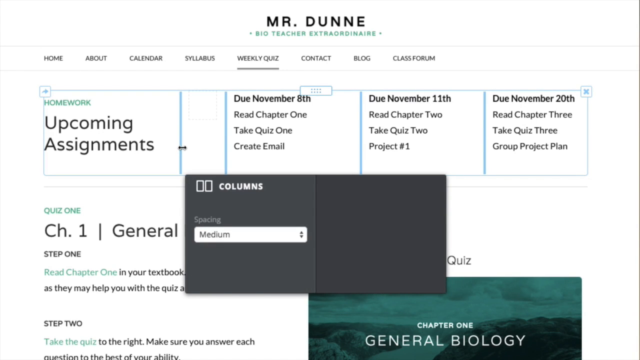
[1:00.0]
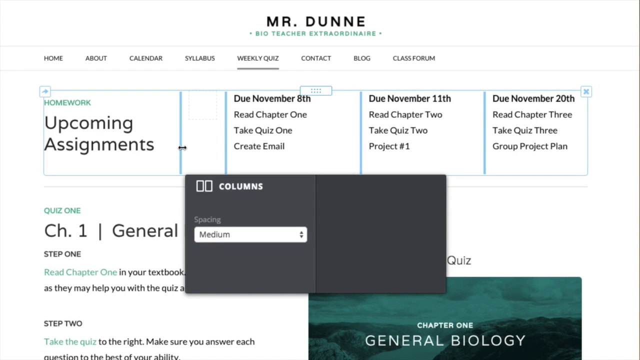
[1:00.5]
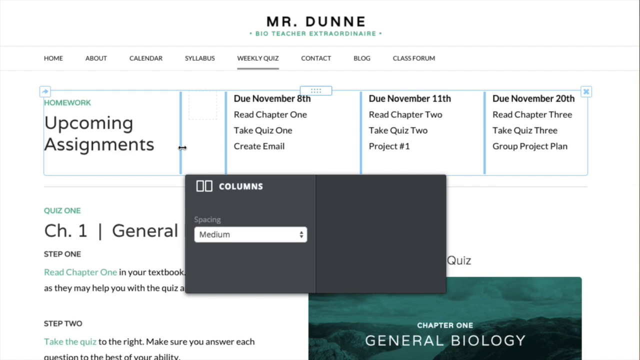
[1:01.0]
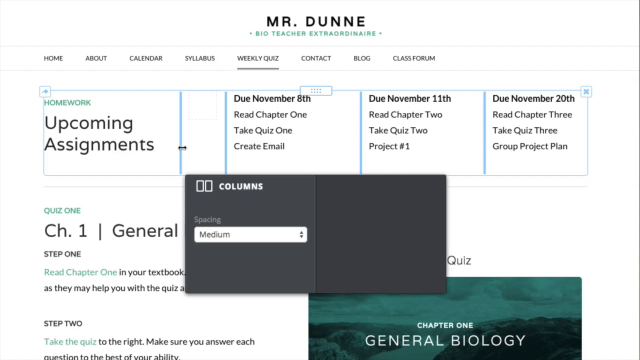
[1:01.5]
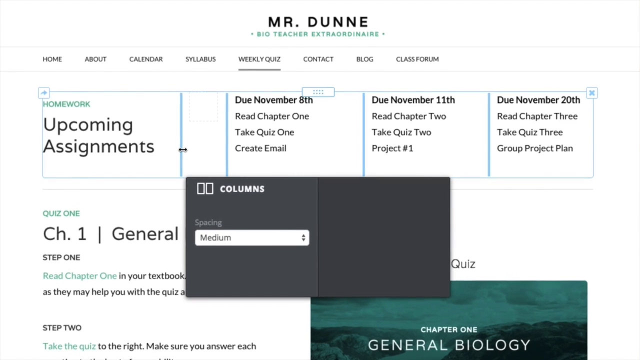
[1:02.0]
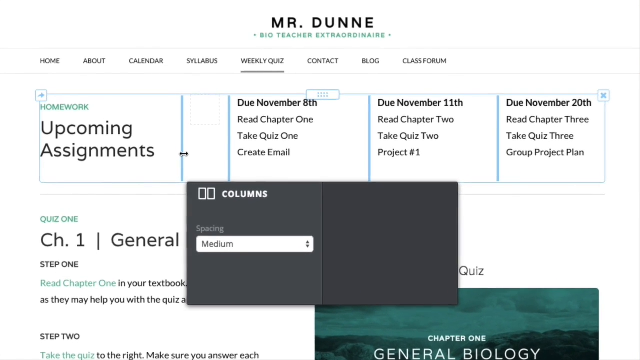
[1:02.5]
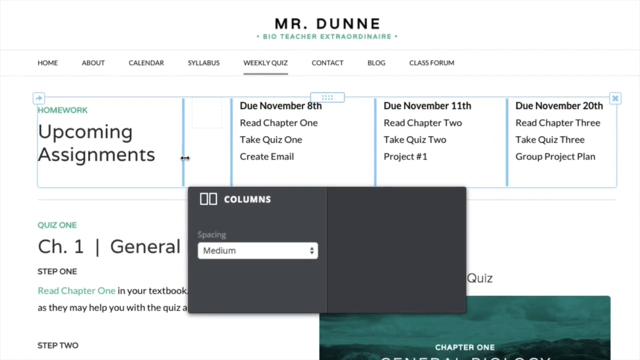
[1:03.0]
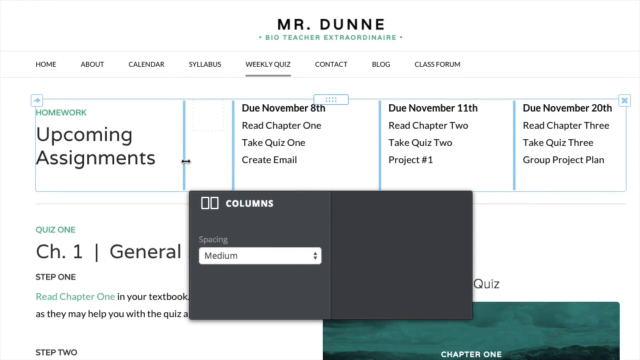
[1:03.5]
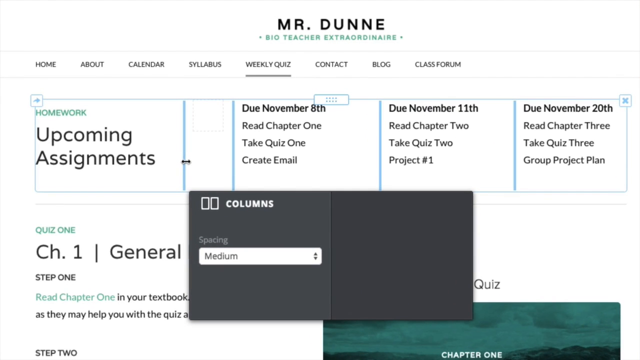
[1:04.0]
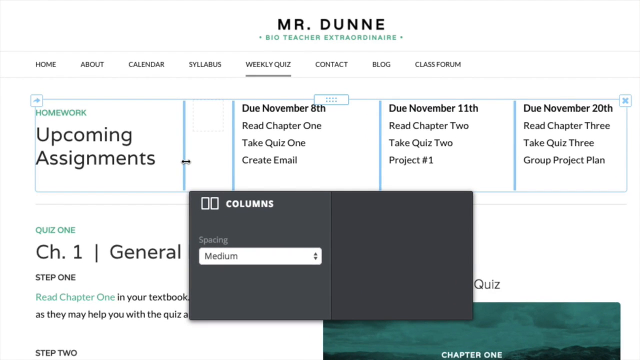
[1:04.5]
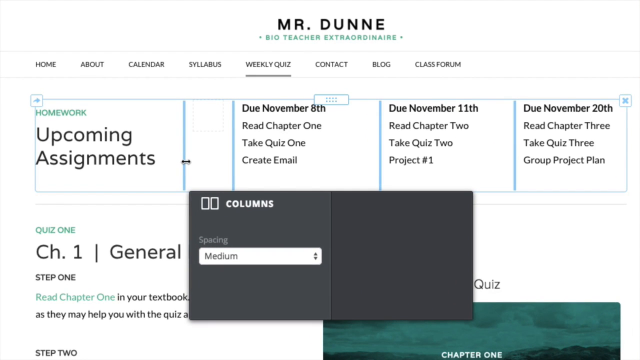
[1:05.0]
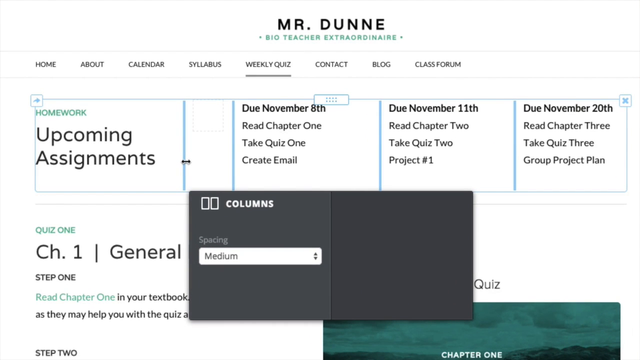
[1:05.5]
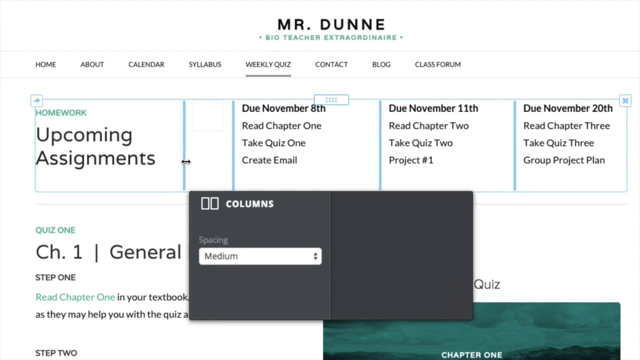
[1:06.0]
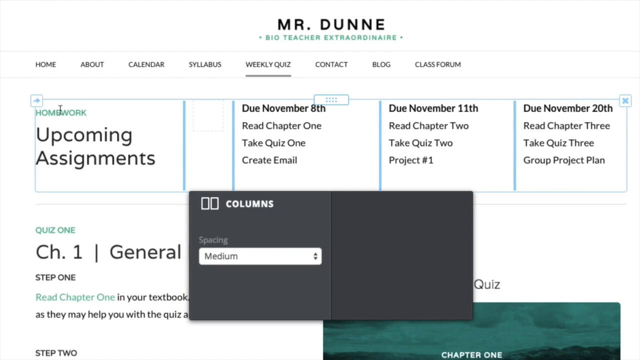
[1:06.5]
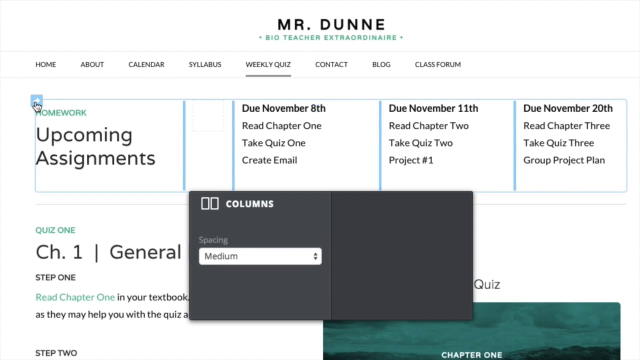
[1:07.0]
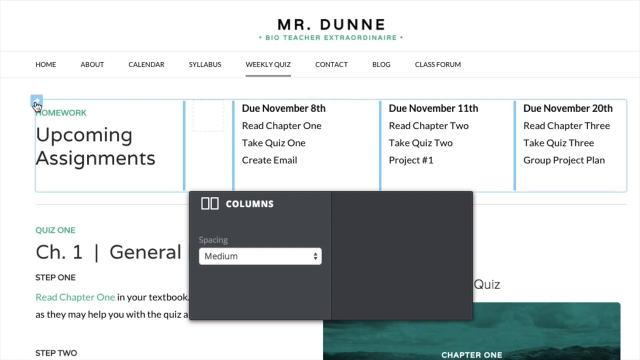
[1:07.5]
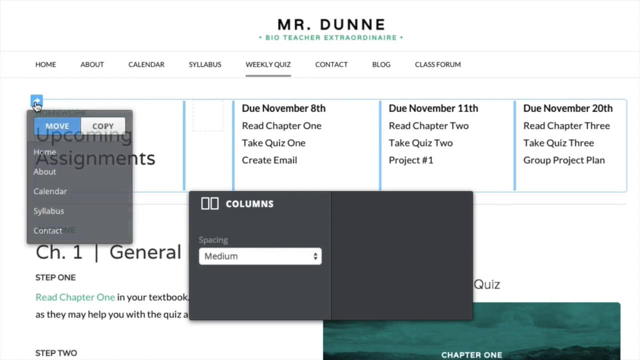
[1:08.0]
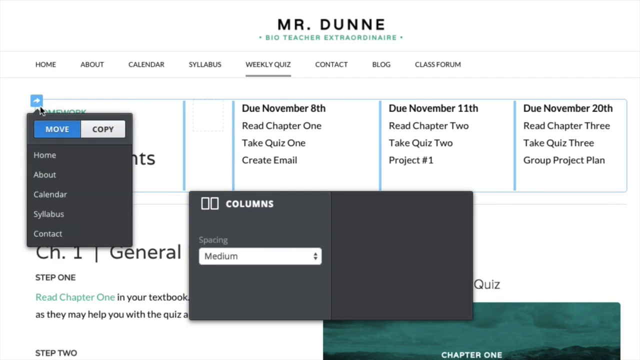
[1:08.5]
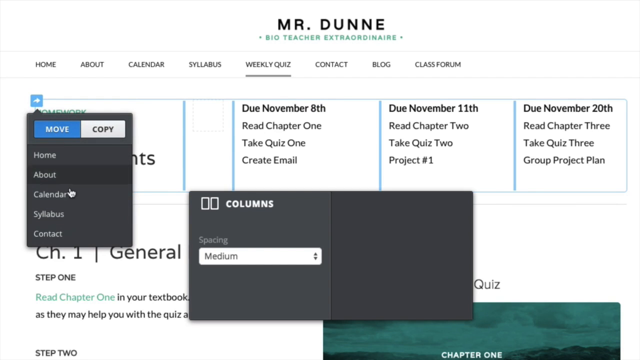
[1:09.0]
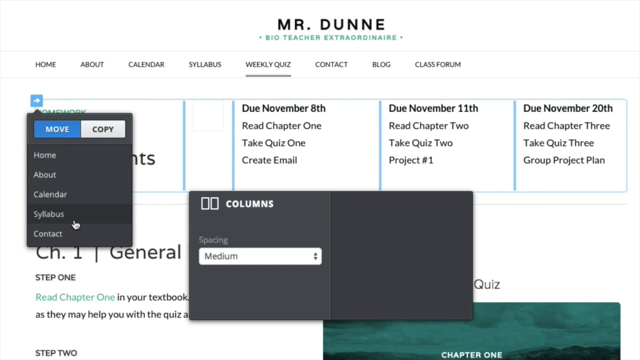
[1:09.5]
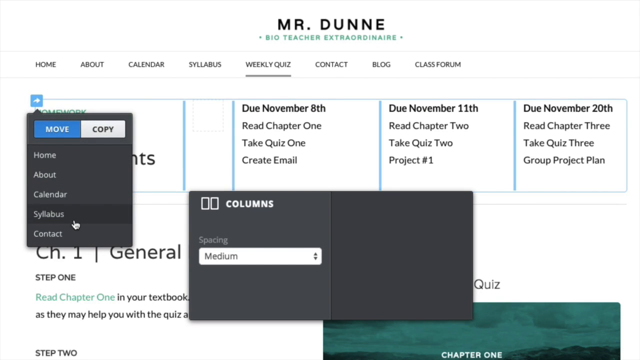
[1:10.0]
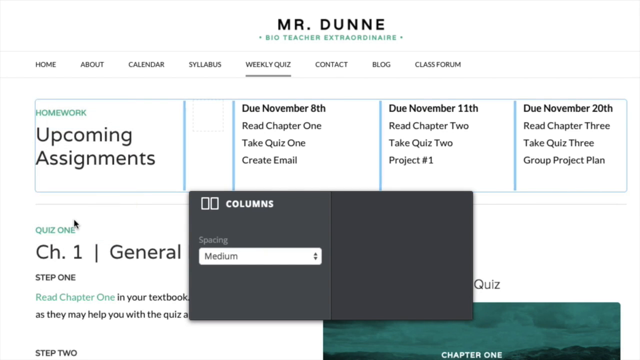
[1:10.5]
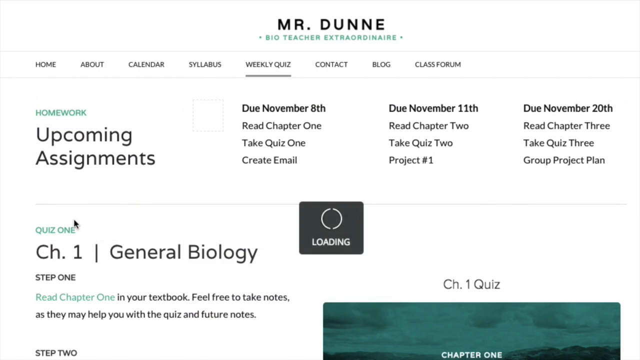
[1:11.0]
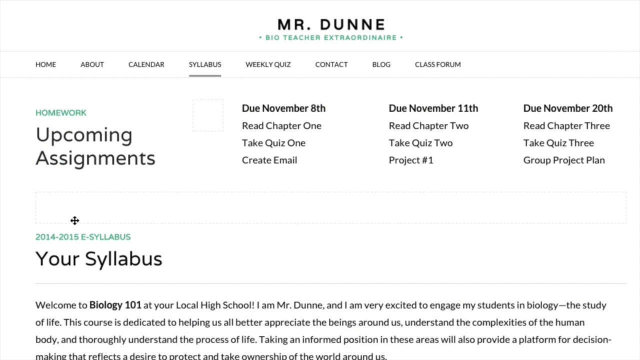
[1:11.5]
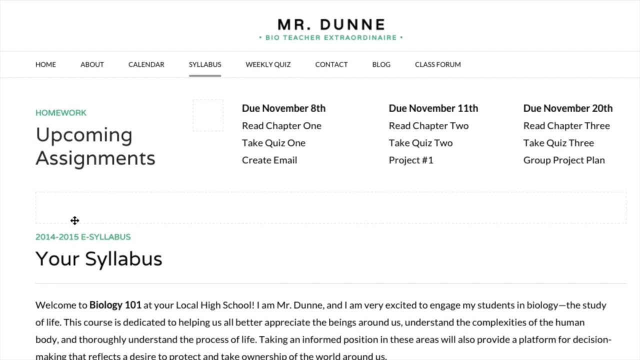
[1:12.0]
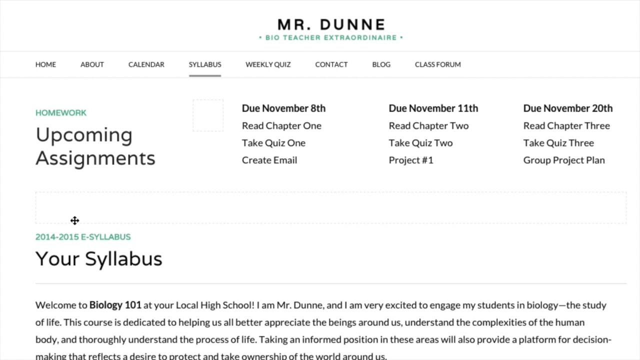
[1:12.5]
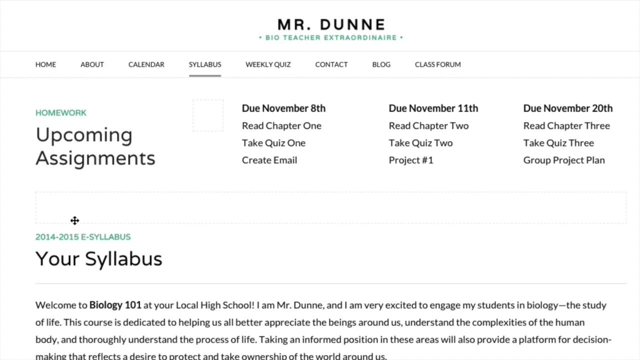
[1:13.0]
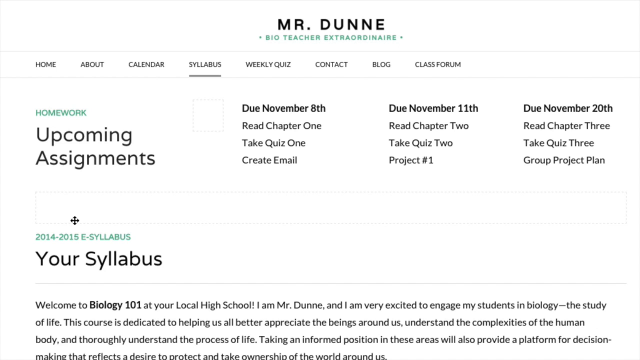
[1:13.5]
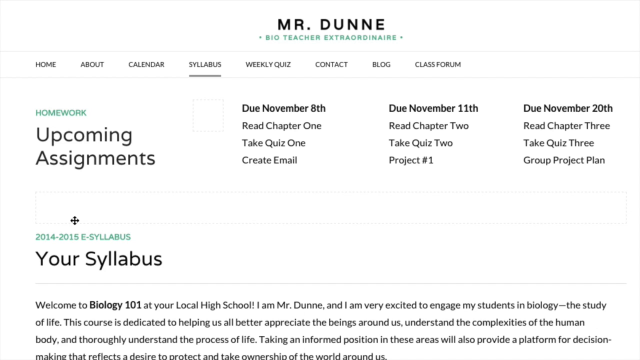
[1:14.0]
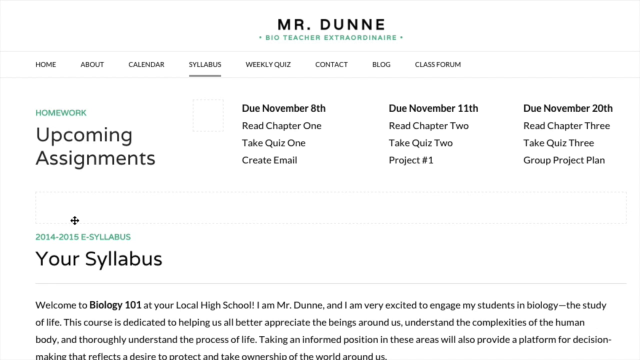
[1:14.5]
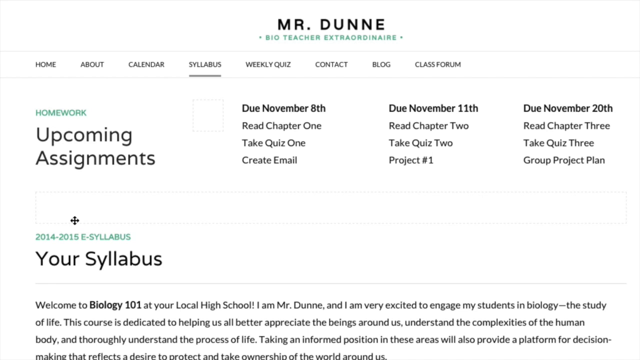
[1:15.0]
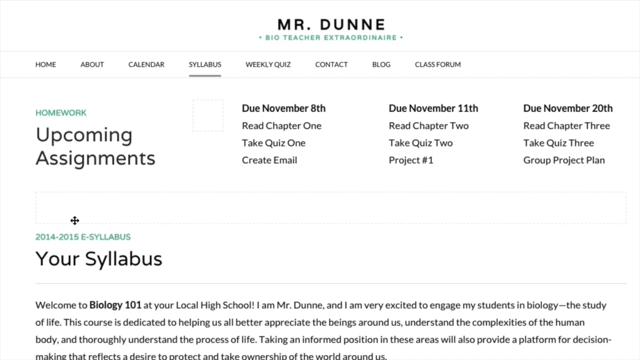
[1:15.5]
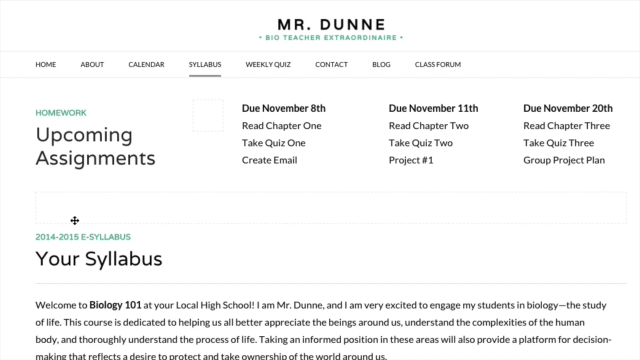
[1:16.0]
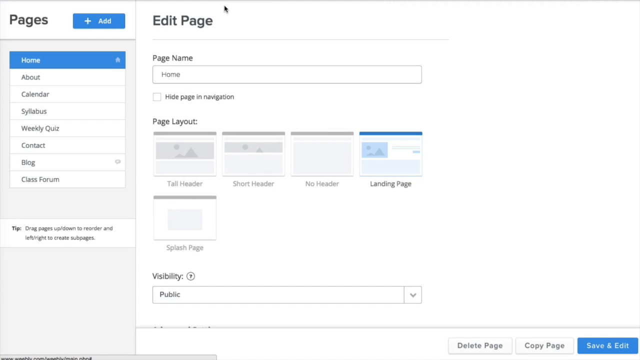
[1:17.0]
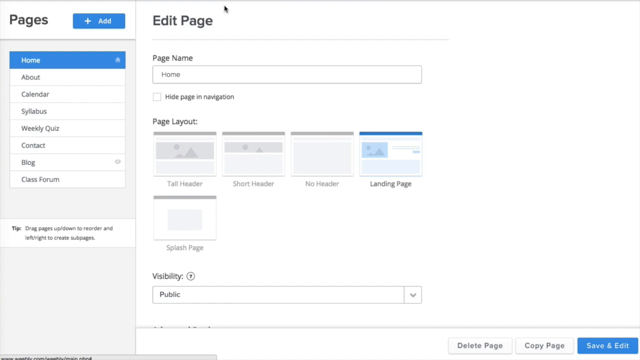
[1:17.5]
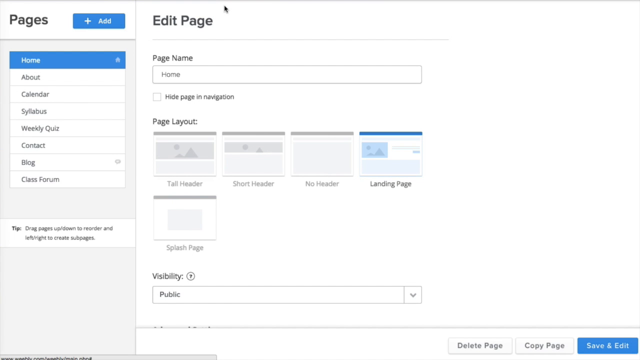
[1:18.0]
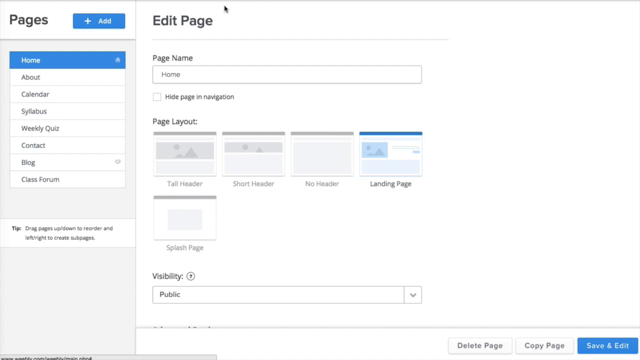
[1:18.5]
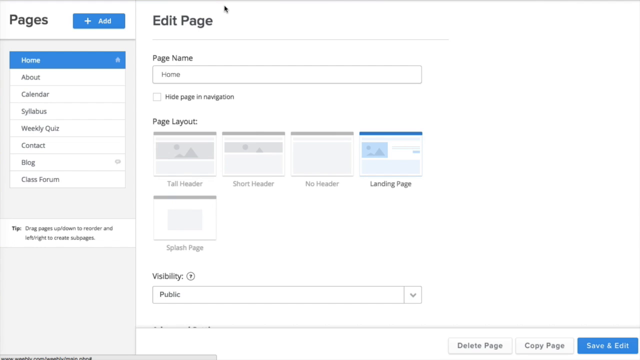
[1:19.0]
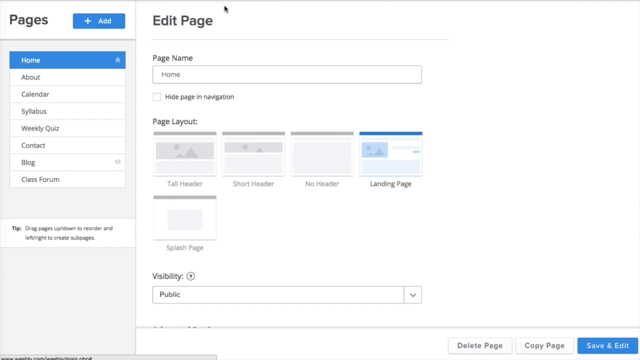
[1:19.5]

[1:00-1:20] The page is a web link for biology with Mr. Dubé, showing an assignment for June to November. There is a calendar, with a blog post on the other side. A hand on the board is shown; the person wears a long-sleeved shirt, with a little skin visible at the side of the hand. "General biology chapter one quiz one" is shown on the screen, along with a November 11th date. A copy is moved and loads, and an edit page appears.